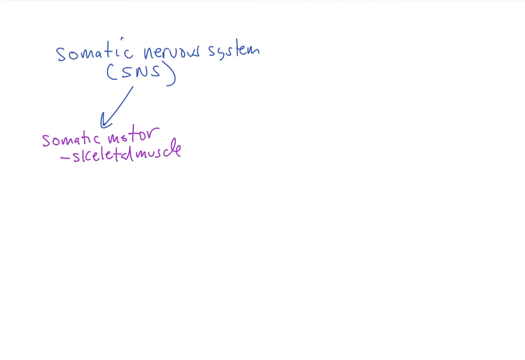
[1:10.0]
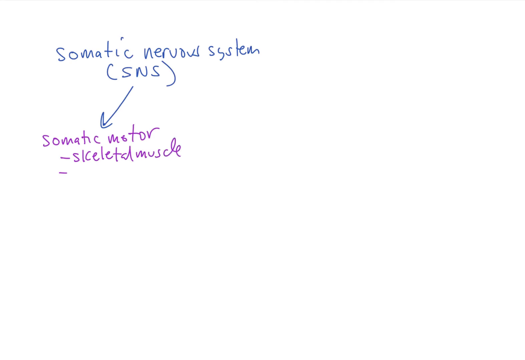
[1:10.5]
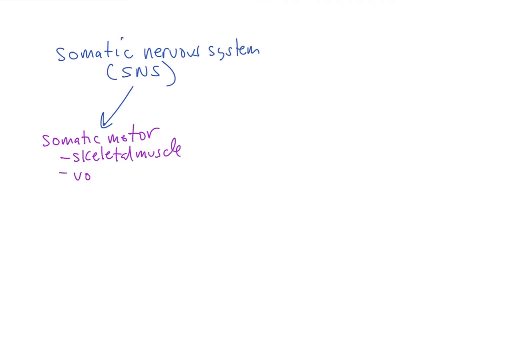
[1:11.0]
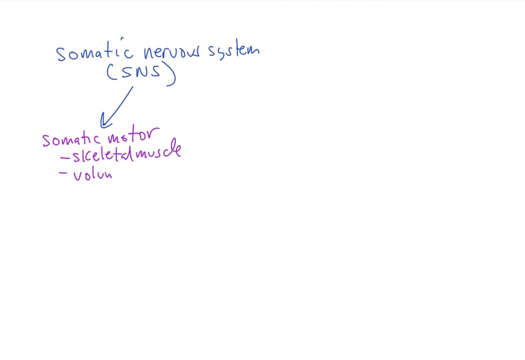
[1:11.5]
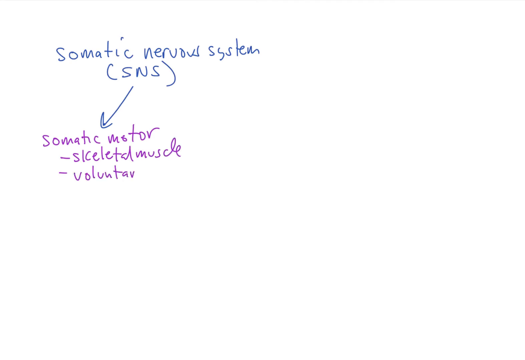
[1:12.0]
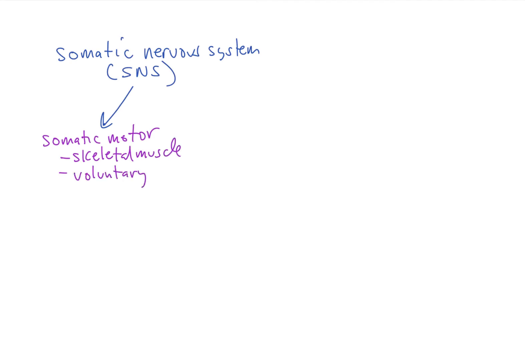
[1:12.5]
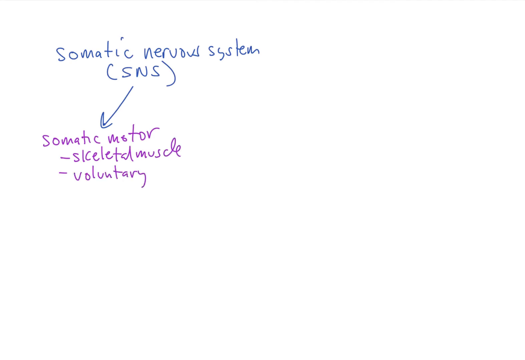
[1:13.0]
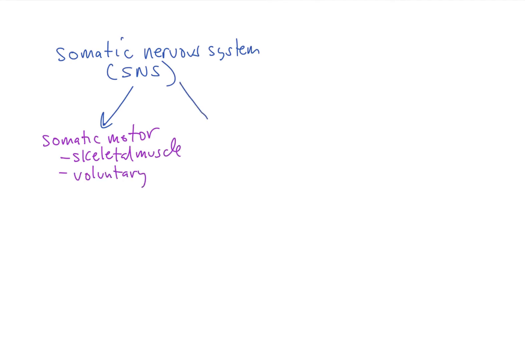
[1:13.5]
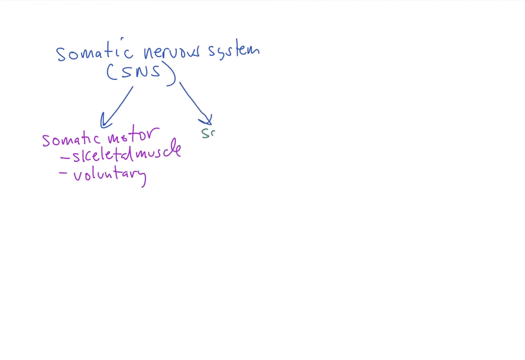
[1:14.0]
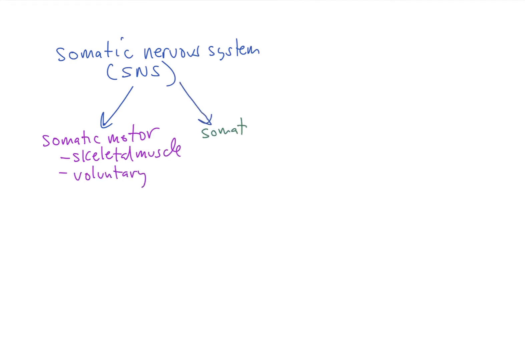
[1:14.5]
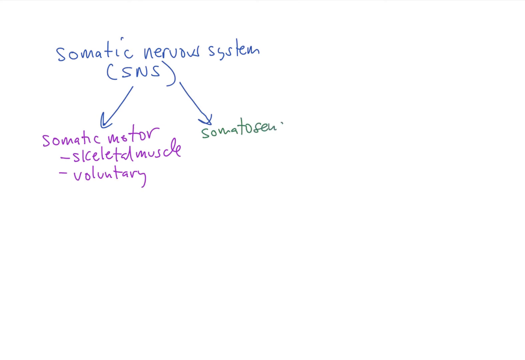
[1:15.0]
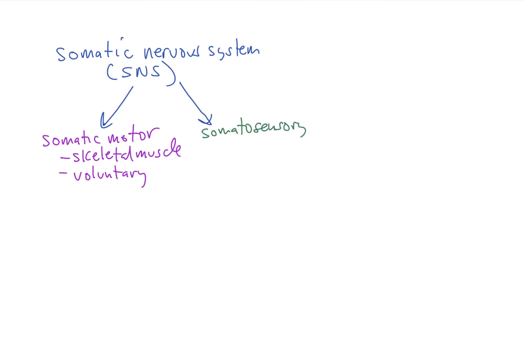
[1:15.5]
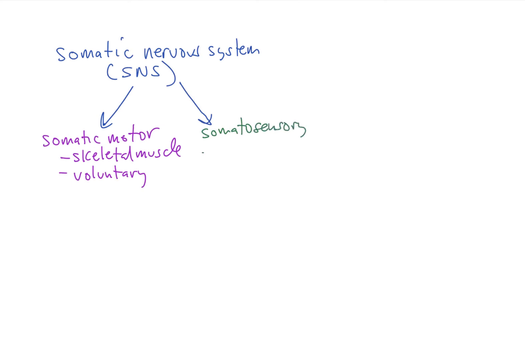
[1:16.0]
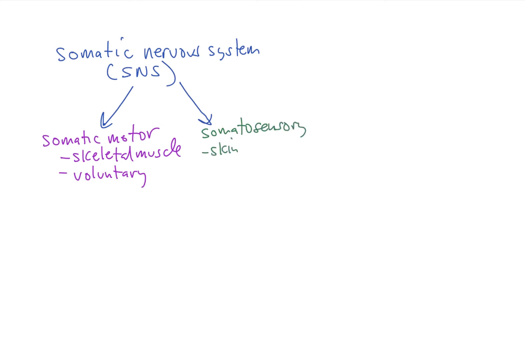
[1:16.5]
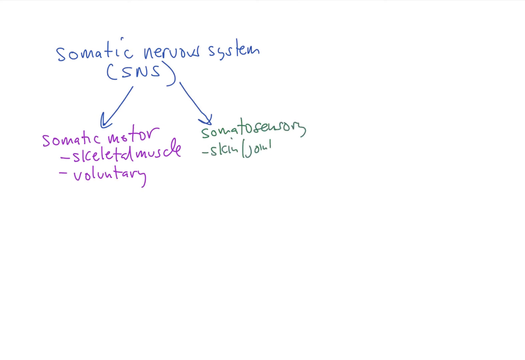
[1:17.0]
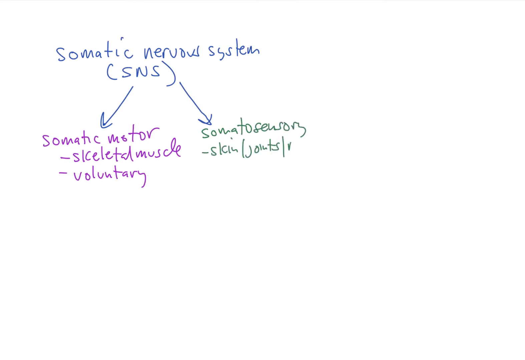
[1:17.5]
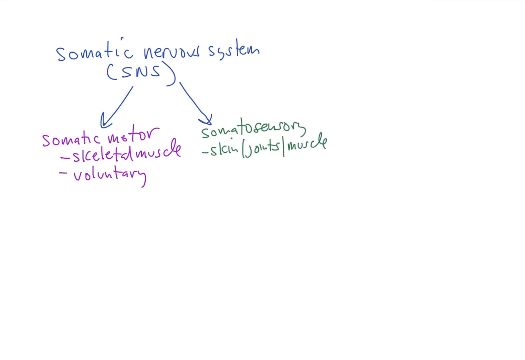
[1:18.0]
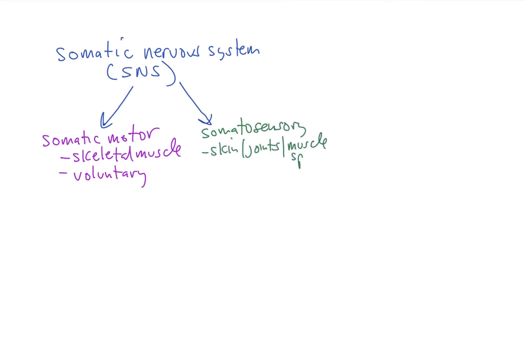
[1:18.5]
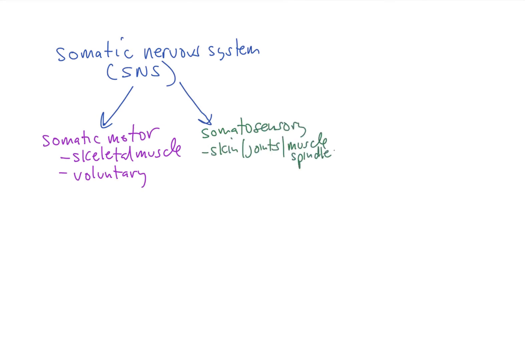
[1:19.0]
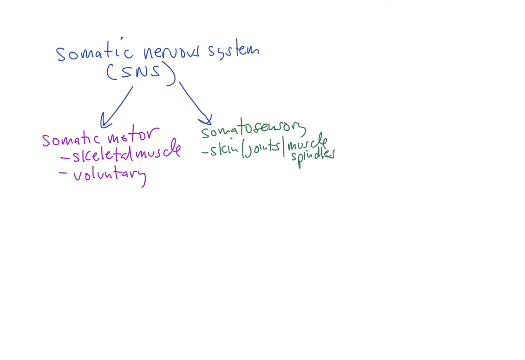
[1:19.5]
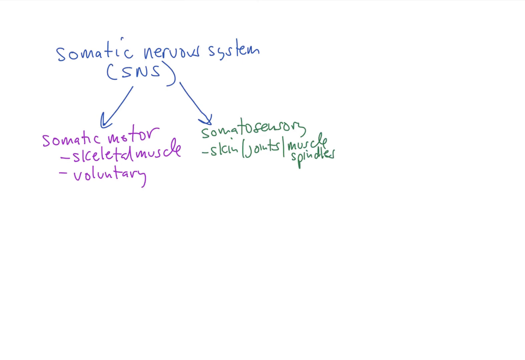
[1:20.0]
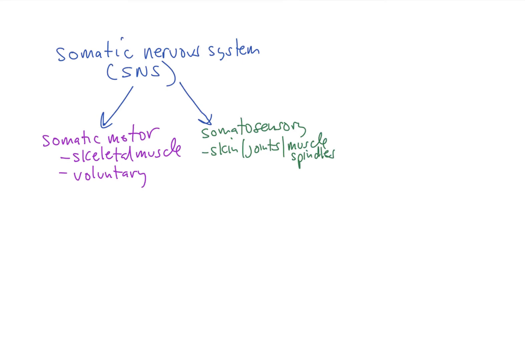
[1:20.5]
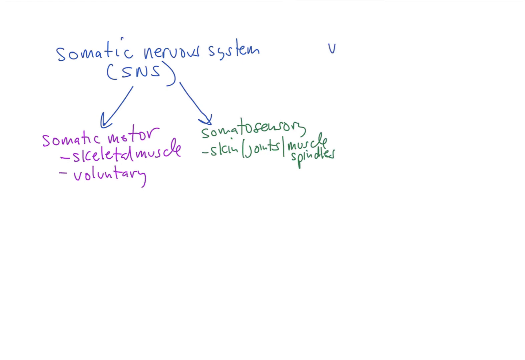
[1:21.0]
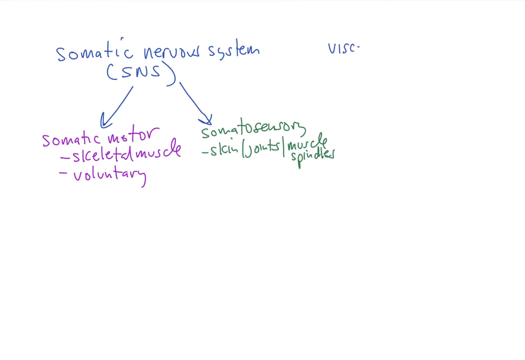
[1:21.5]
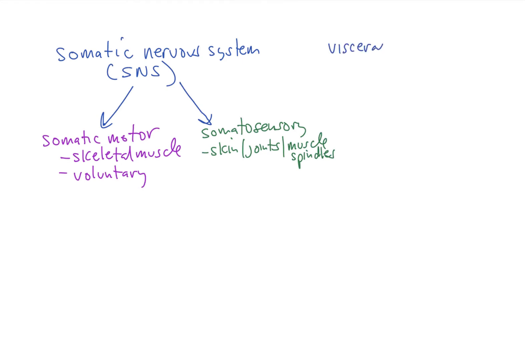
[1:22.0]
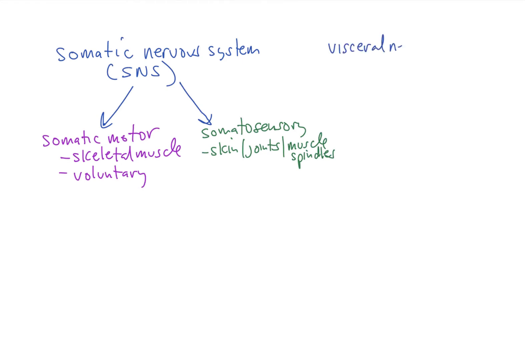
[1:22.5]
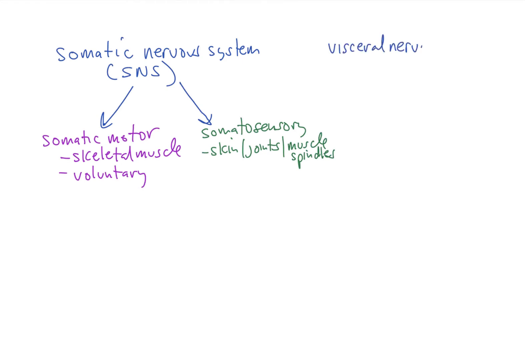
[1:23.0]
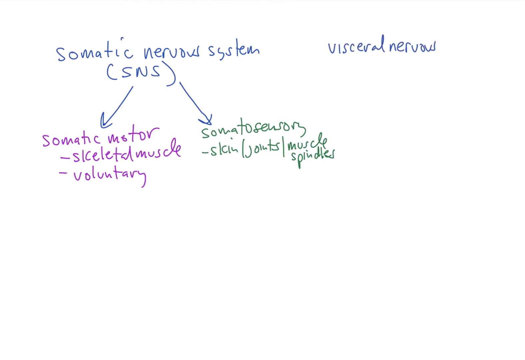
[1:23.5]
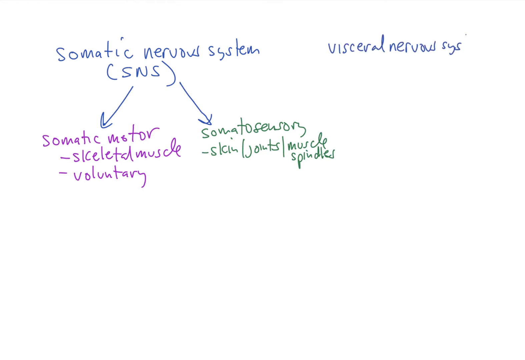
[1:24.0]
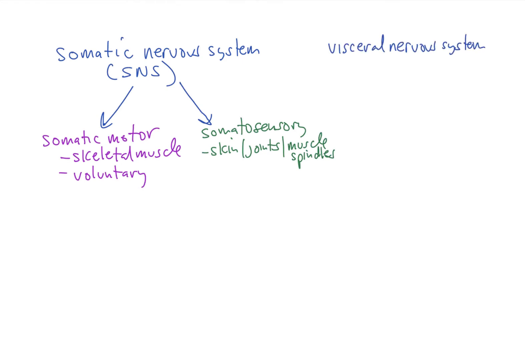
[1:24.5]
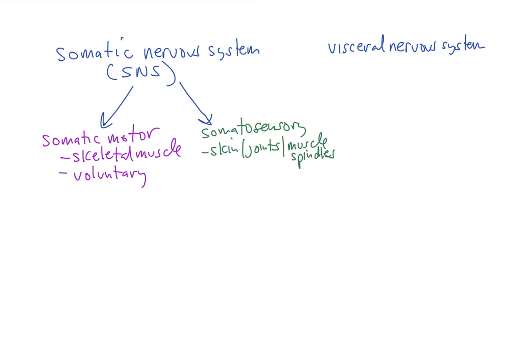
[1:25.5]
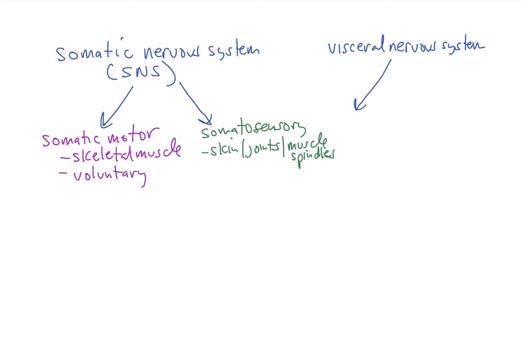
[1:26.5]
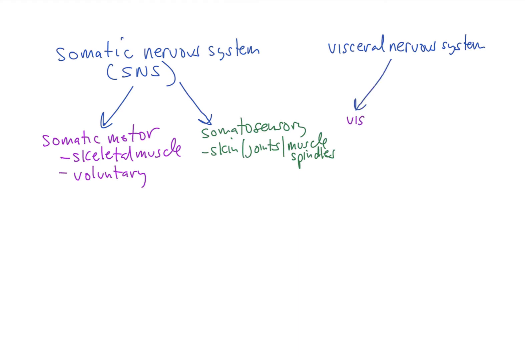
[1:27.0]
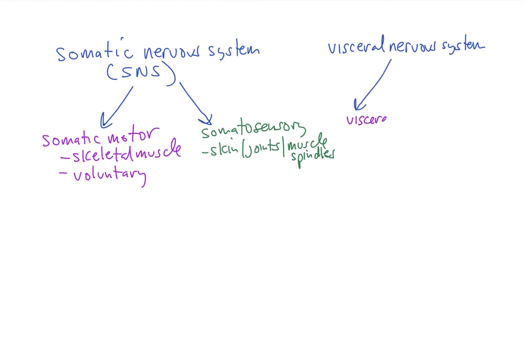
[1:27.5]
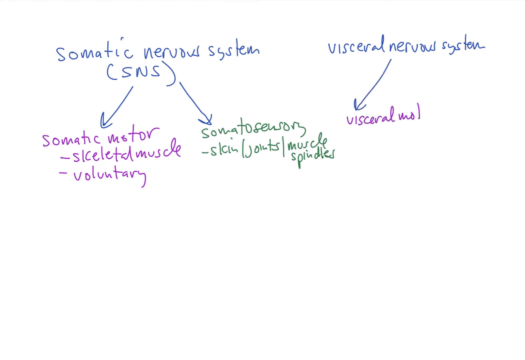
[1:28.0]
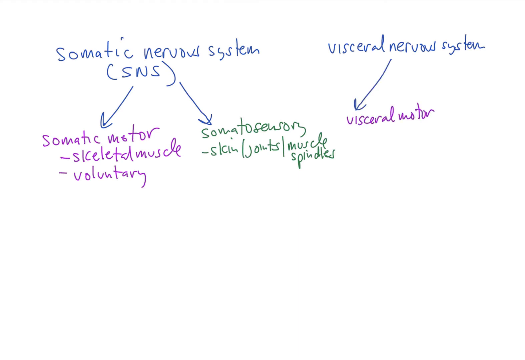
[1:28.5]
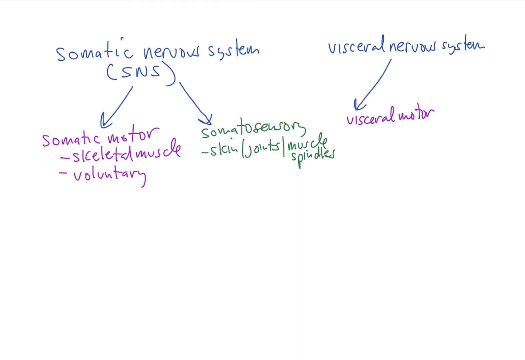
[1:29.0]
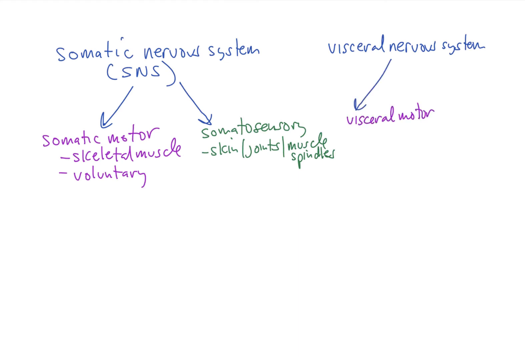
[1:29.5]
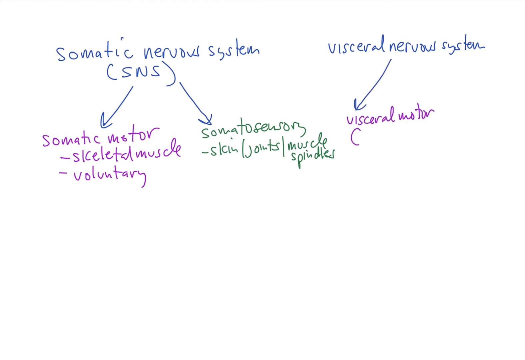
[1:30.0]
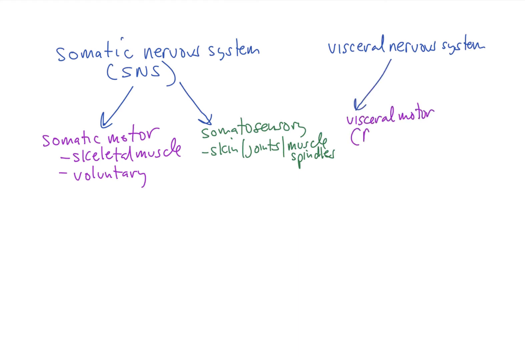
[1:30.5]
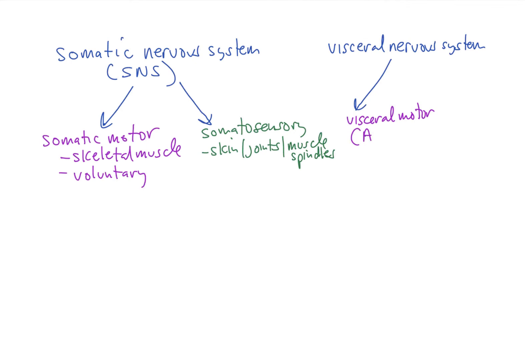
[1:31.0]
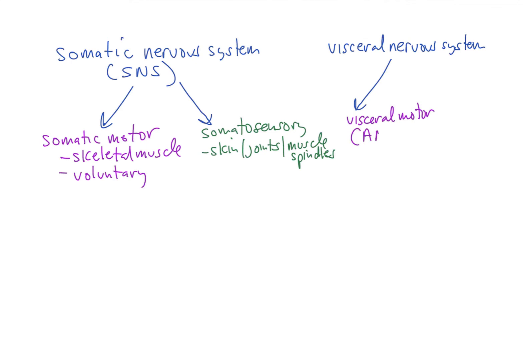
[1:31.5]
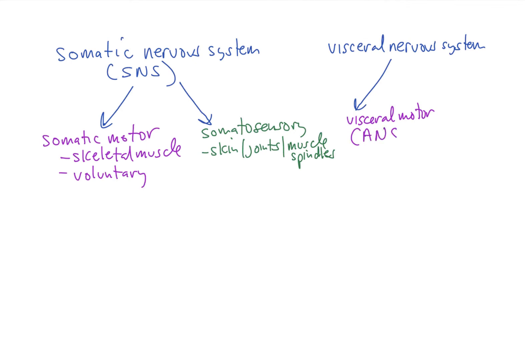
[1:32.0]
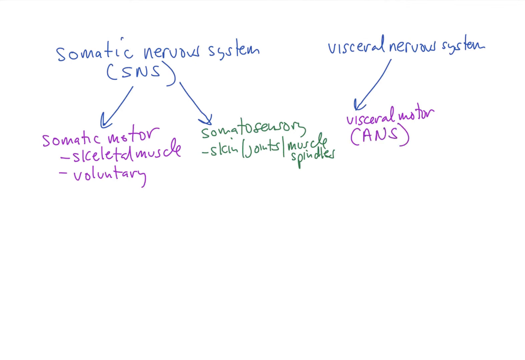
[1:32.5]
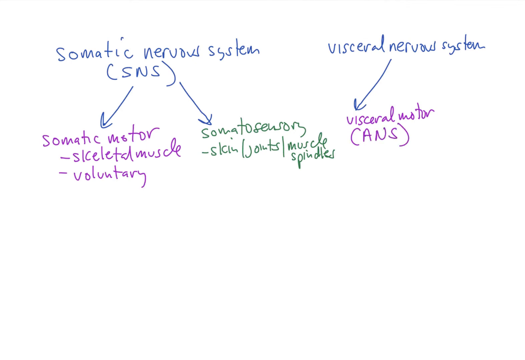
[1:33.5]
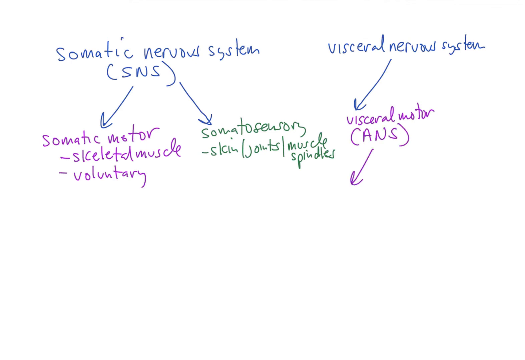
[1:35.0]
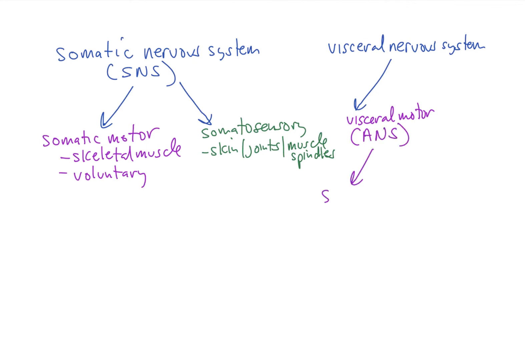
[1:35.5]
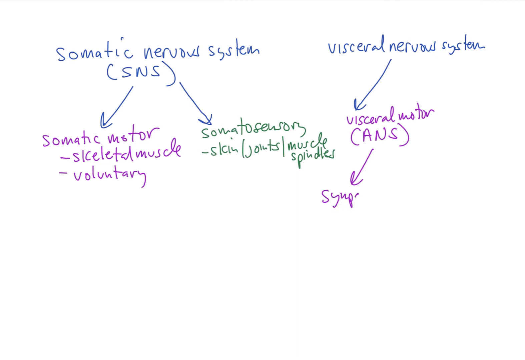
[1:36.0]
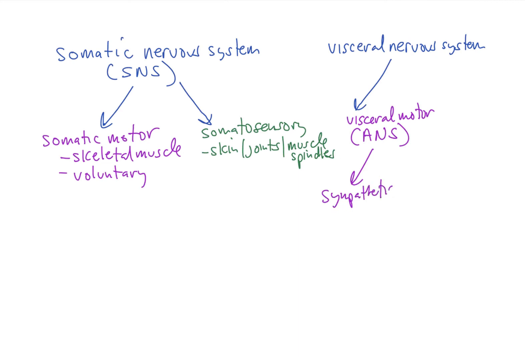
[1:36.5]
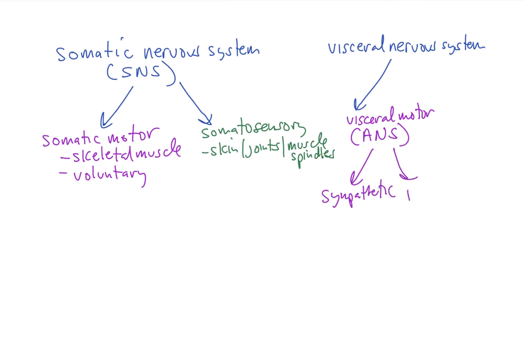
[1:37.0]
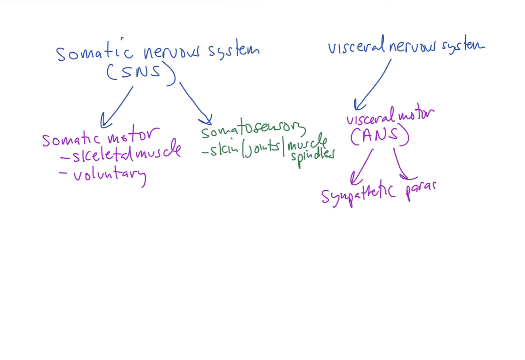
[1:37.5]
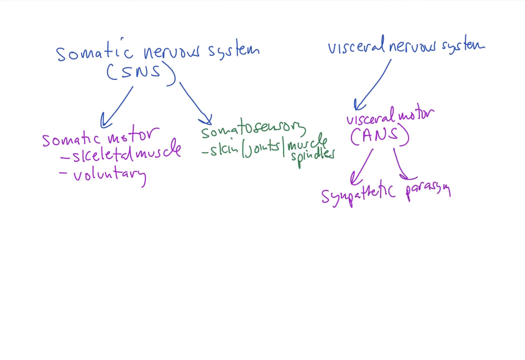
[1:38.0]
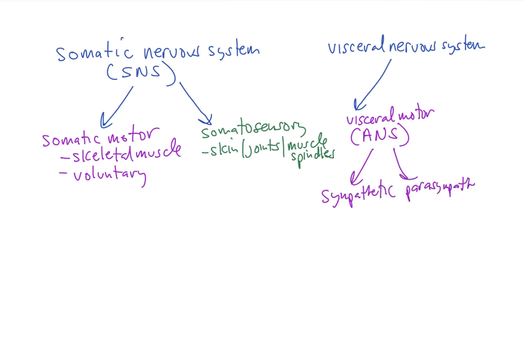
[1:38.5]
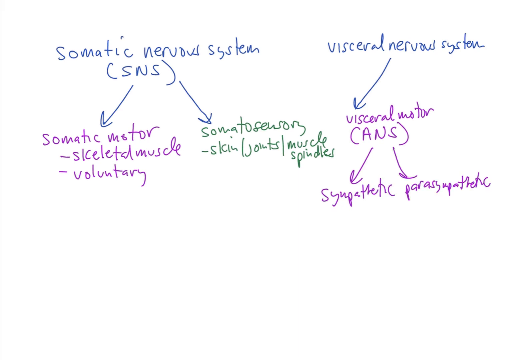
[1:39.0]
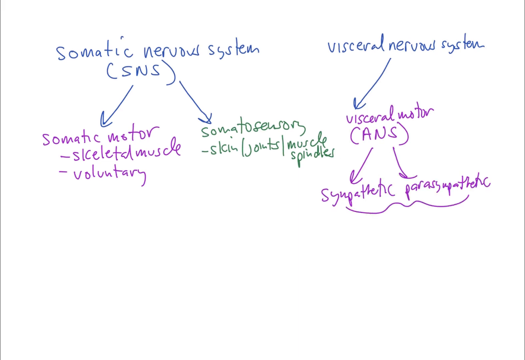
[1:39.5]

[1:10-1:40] More bullet points are added under the "somatic motor" label: "voluntary" is written under skeletal muscle. Another arrow is drawn pointing towards the bottom right corner, to the right of somatic motor, and this section is titled "somatosensory" in green font, with a bullet point underneath reading "skin/joints/muscle spindles". To the right of "somatic nervous system", on the right side of the screen, a main title reads "visceral nervous system". An arrow is drawn towards the bottom left, and under it purple text reads "visceral motor" with "ANS" in brackets. An arrow is drawn from this label downwards towards the bottom left, where "sympathetic" is written on the left and "parasympathetic" on the right, and a squiggly bracket is drawn between these two words. The video seems to be splitting the nervous system into different sections based on function and naming.